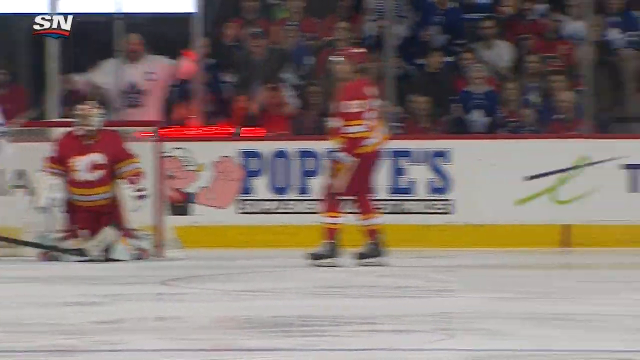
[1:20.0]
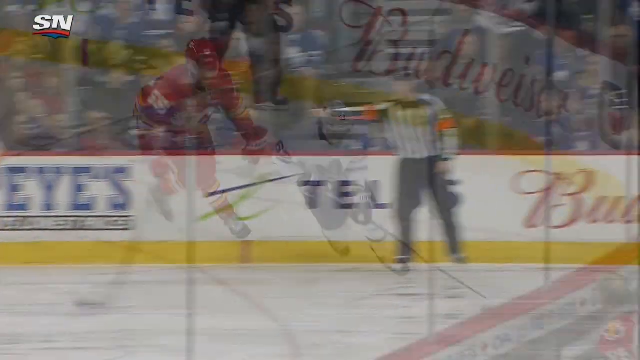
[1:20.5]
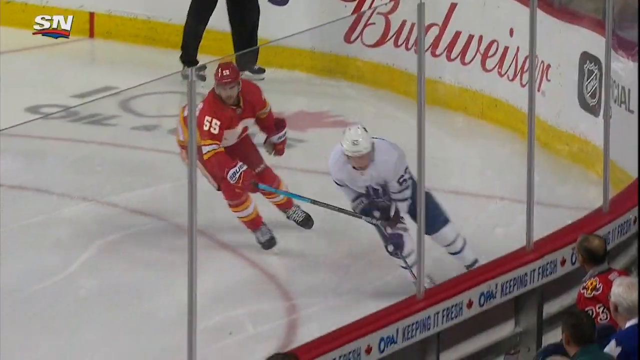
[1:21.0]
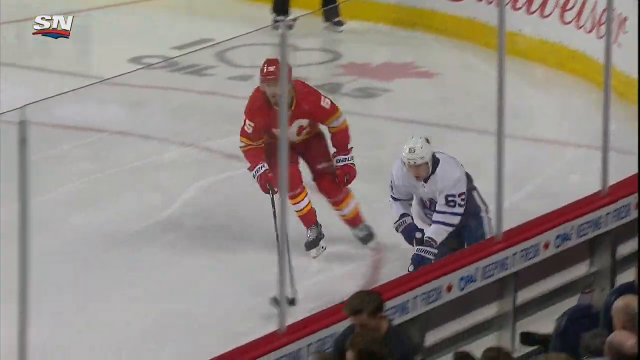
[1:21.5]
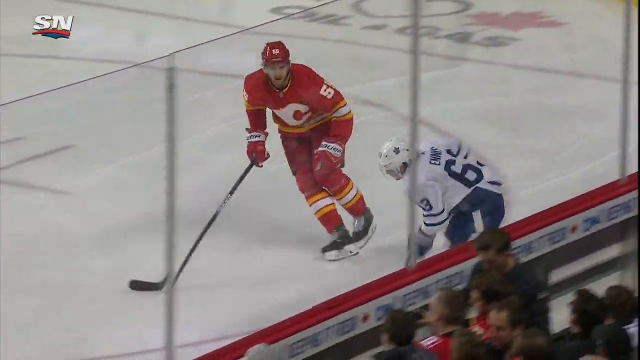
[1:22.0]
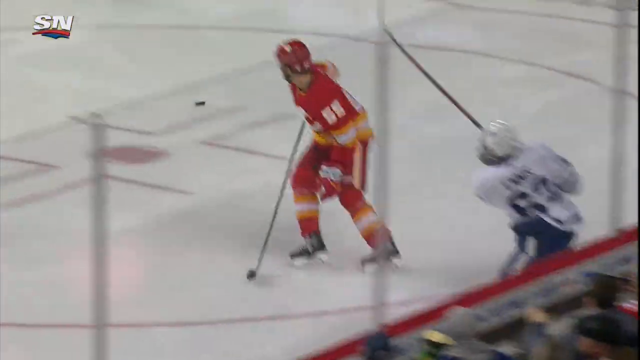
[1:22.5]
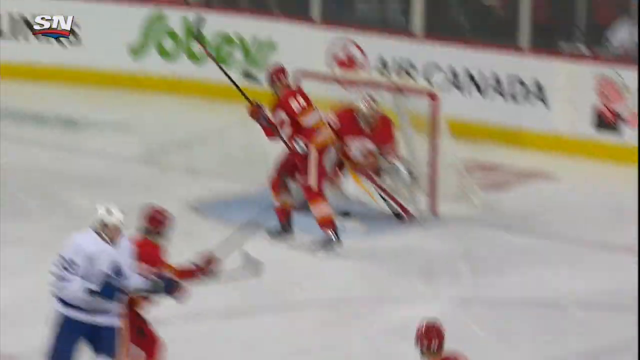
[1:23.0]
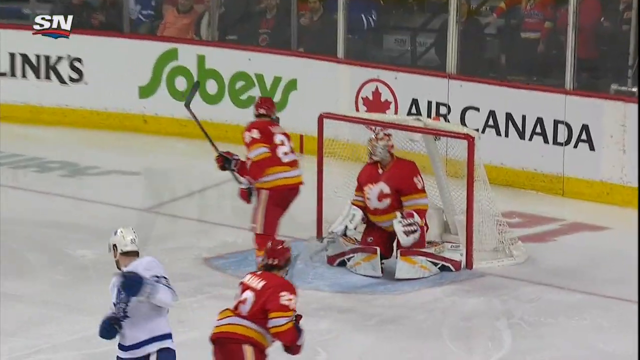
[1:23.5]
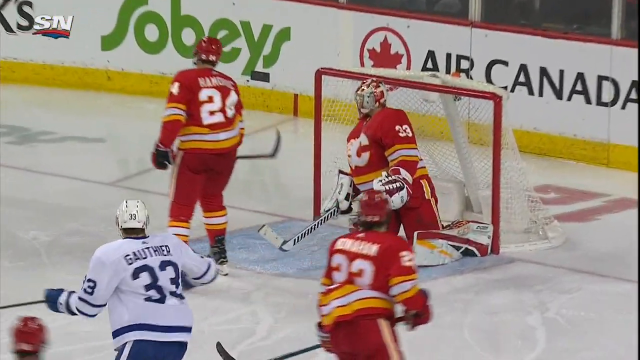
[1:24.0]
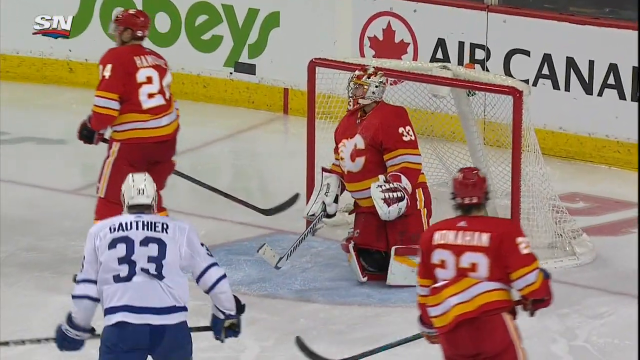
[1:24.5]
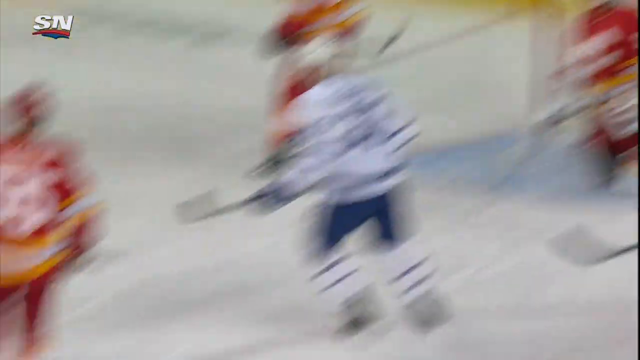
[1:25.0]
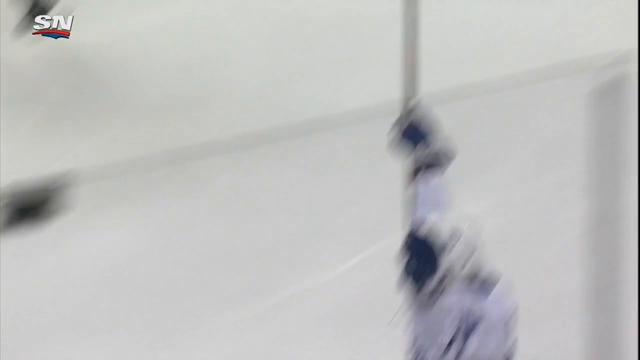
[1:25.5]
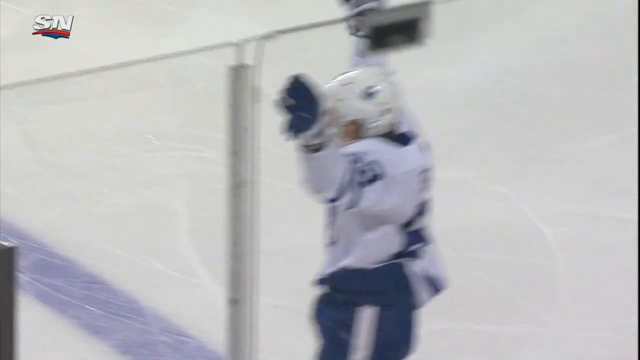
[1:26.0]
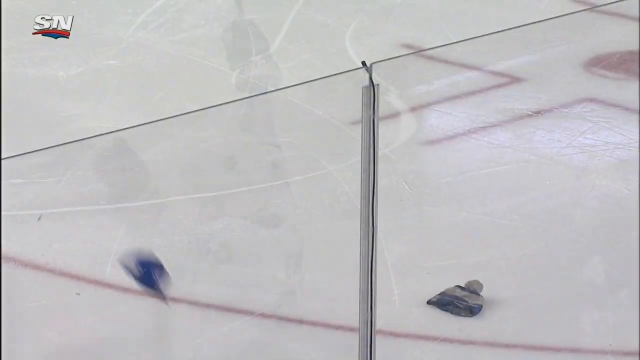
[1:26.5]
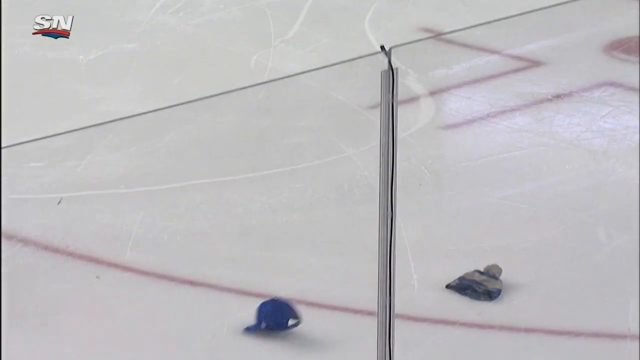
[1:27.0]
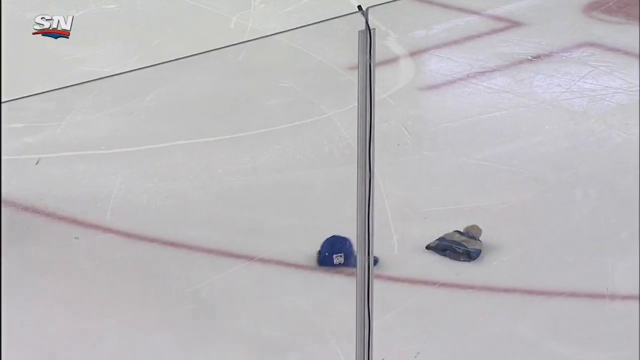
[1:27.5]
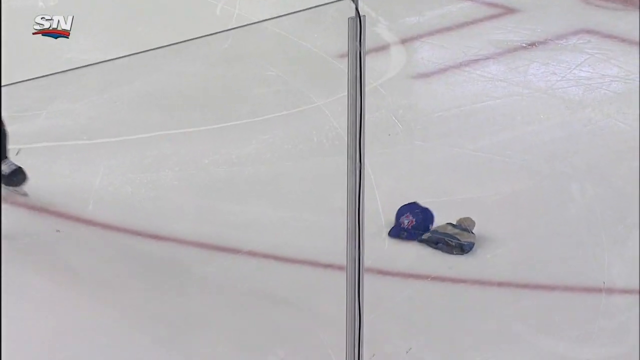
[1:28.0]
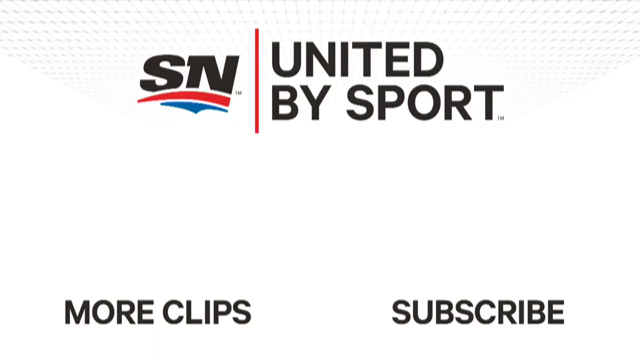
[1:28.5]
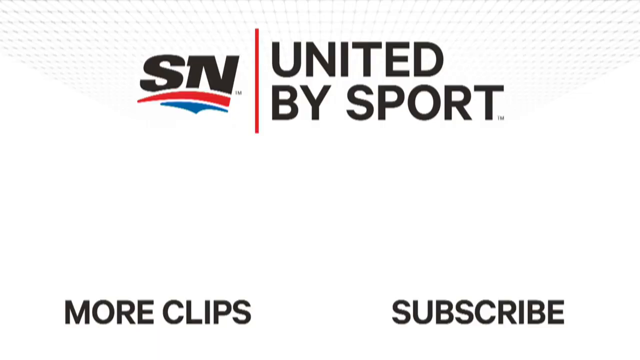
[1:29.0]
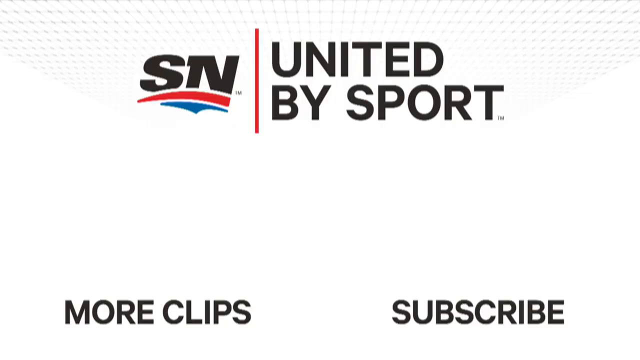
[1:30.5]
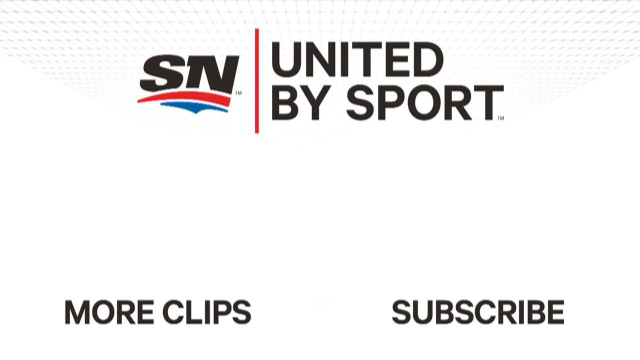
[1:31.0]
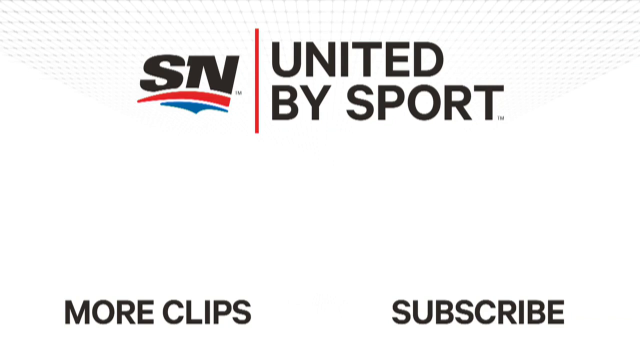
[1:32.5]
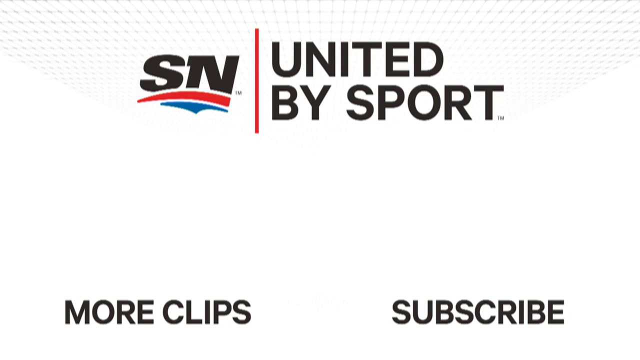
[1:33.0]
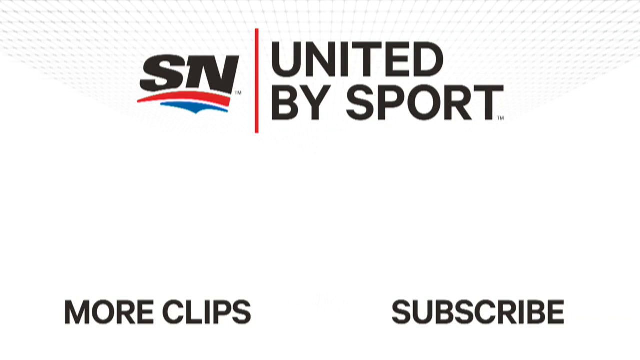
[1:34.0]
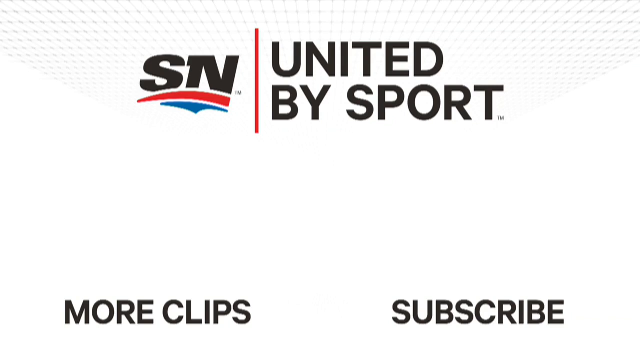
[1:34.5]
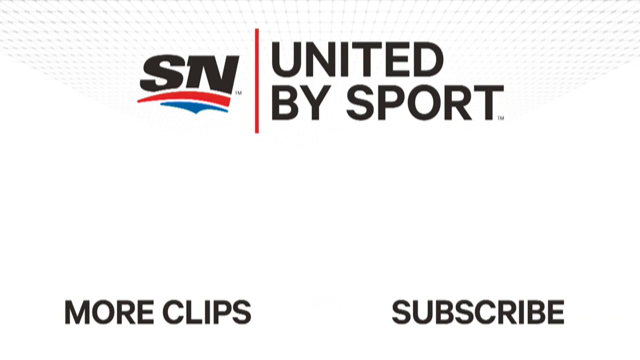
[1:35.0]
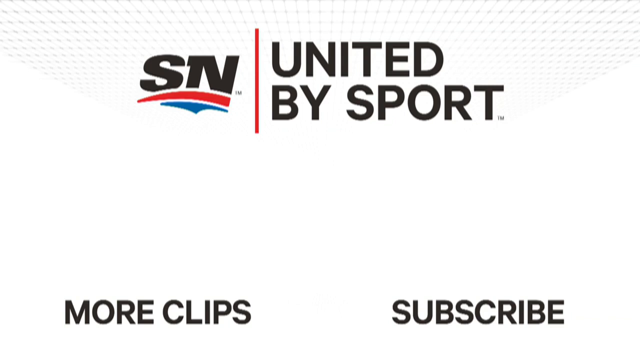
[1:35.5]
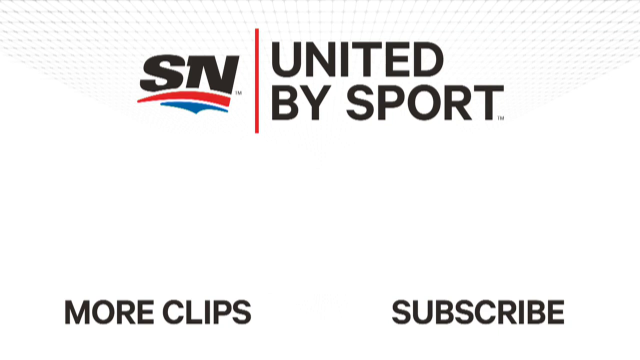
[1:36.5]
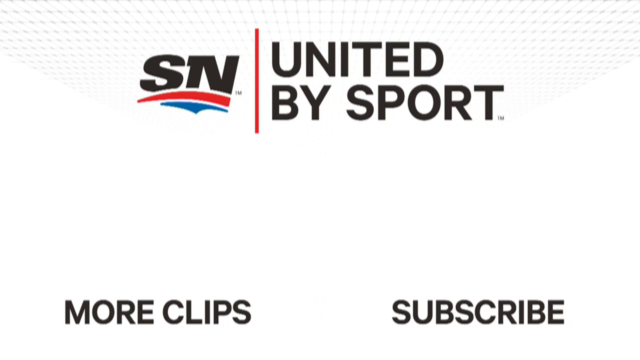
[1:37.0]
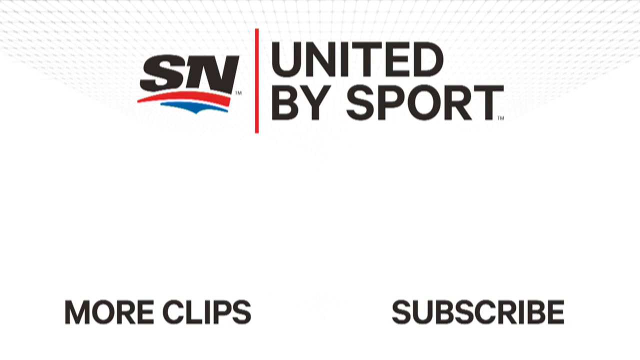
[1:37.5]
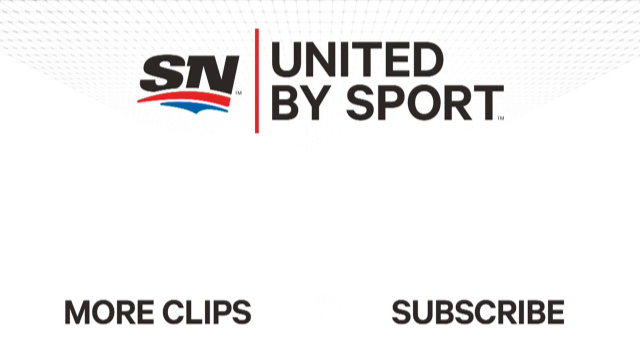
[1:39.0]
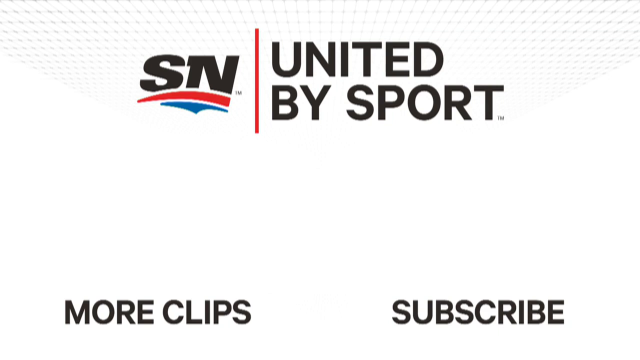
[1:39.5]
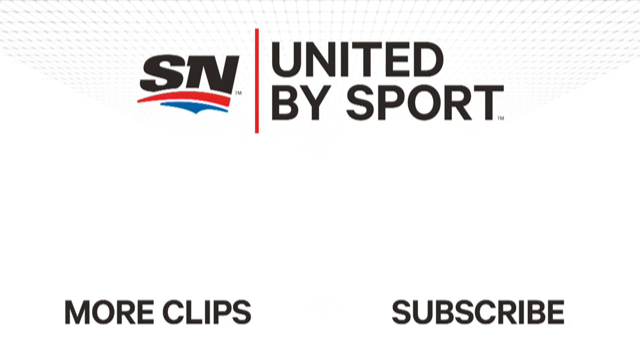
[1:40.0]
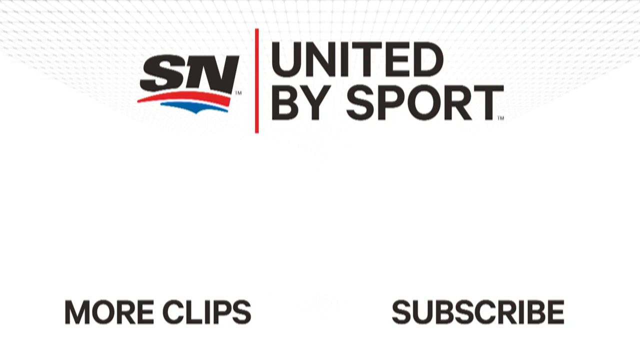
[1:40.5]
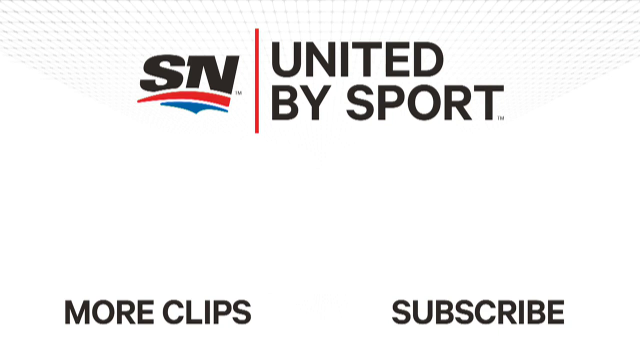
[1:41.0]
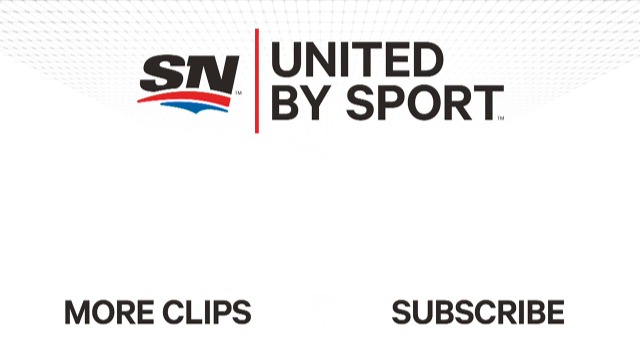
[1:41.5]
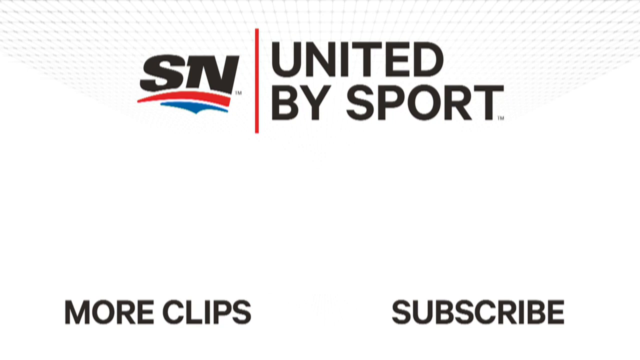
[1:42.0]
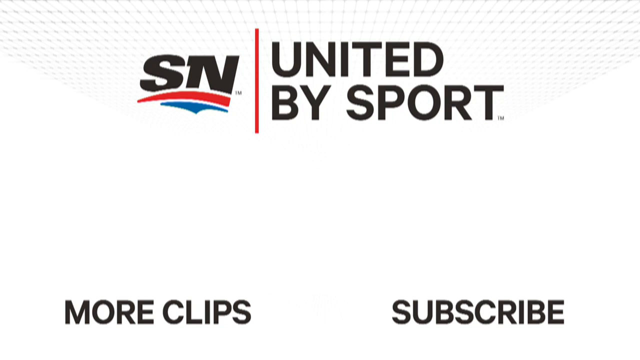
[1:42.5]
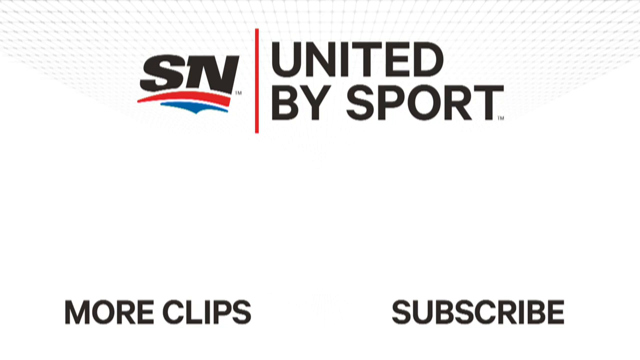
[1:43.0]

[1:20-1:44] The Calgary Flames are on the field, with at least three Flames players and the goalie in view. In the background, Popeyes appears as one of the game's sponsors, and fans in the stadium watch from behind the protective glass. Calgary Flames number 55 is vigorously on the tail of a Toronto Maple Leafs player to prevent him from scoring, but the pursuit fails and the Toronto Maple Leafs score yet another goal. A Toronto Maple Leafs player then skates down the field to the other end with both arms raised in the air, cheering for his team.